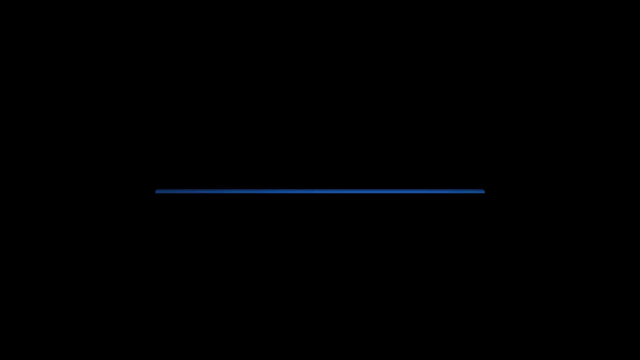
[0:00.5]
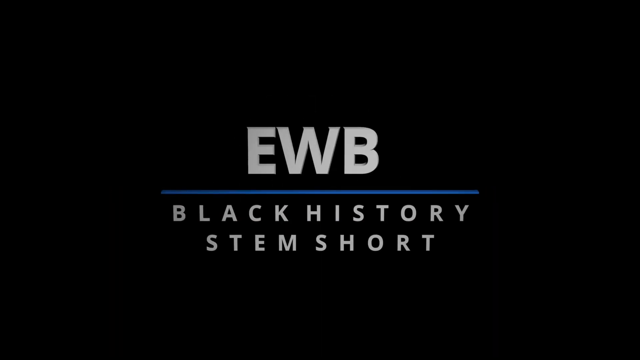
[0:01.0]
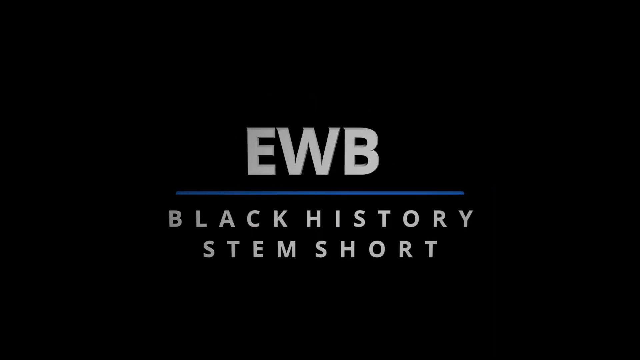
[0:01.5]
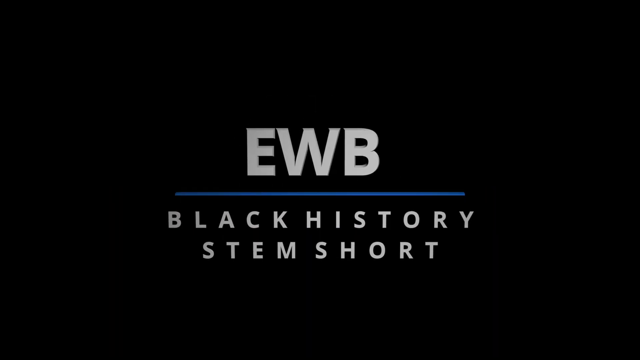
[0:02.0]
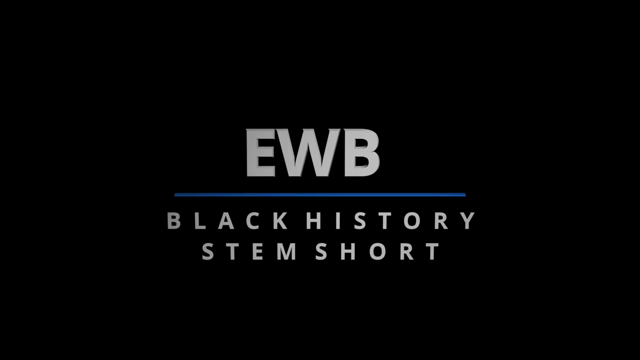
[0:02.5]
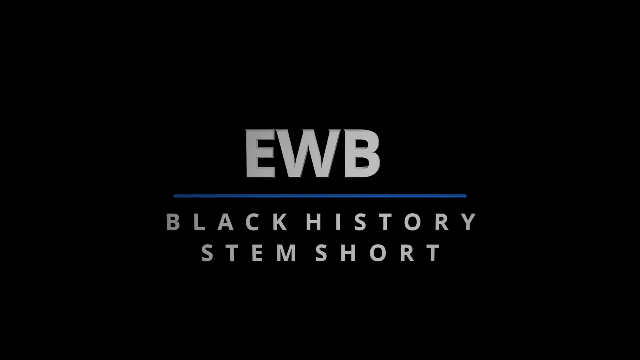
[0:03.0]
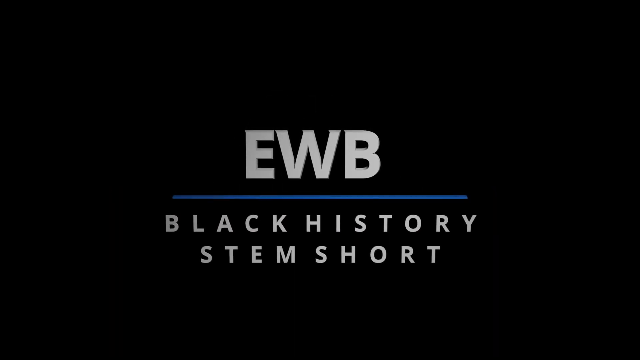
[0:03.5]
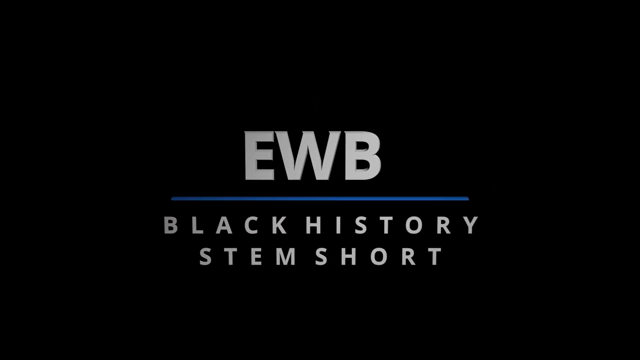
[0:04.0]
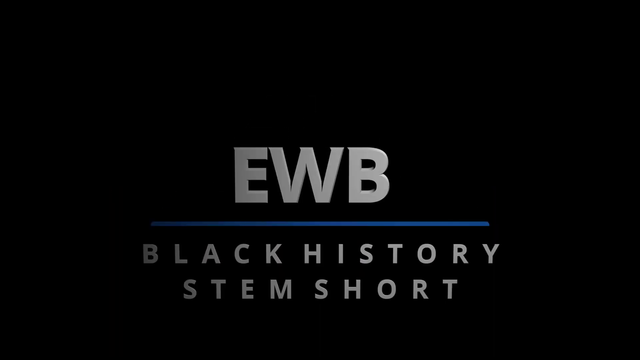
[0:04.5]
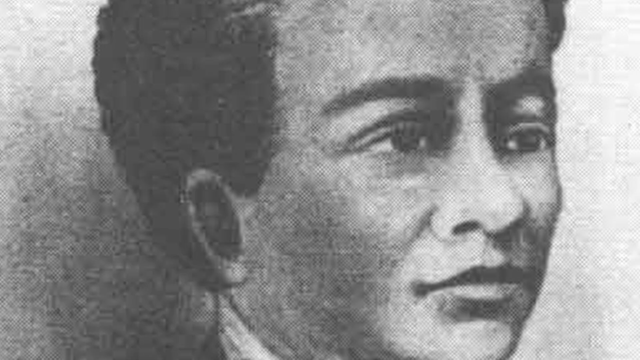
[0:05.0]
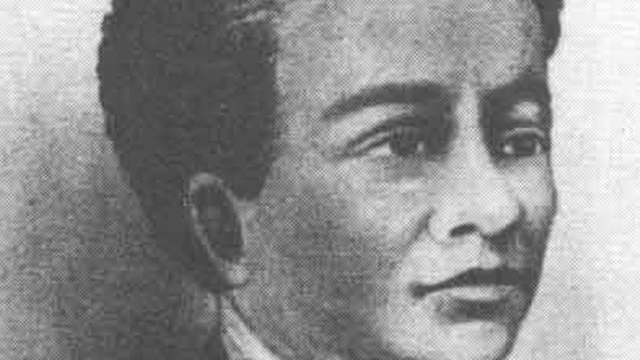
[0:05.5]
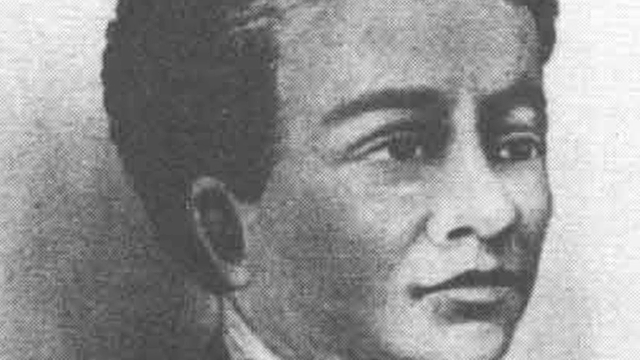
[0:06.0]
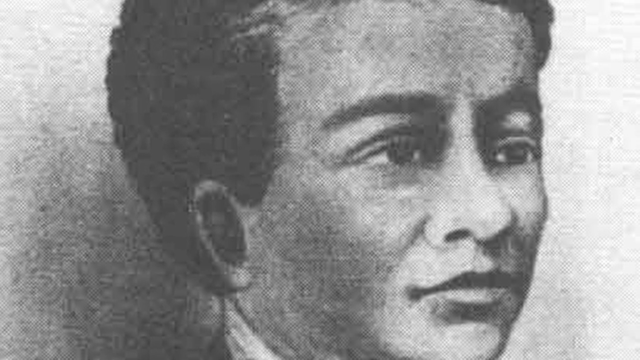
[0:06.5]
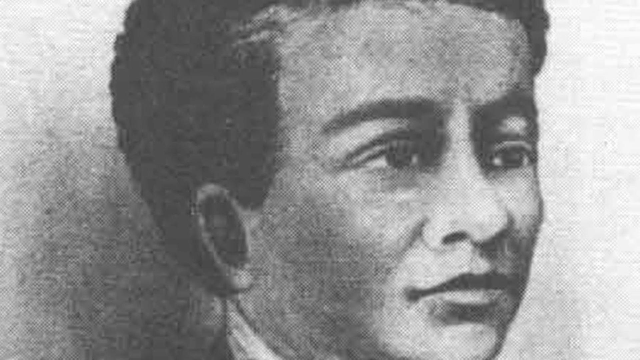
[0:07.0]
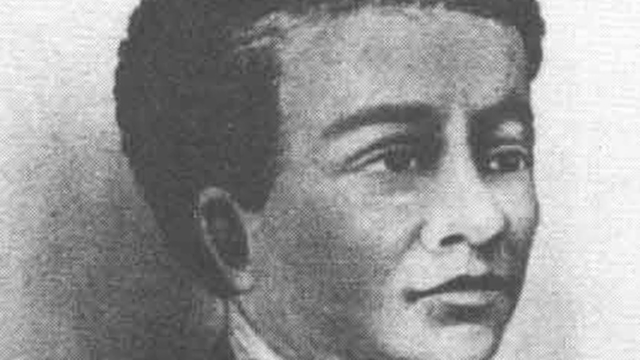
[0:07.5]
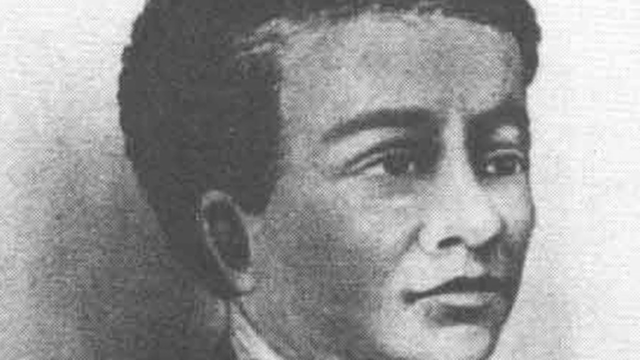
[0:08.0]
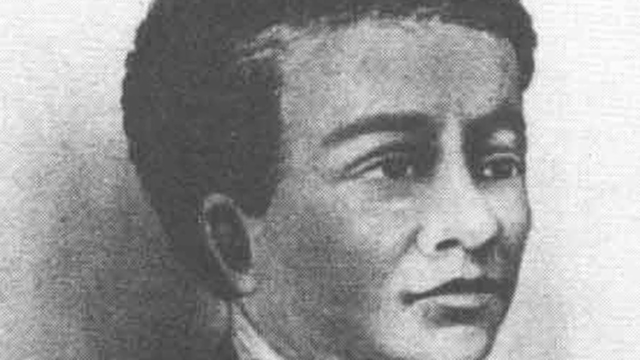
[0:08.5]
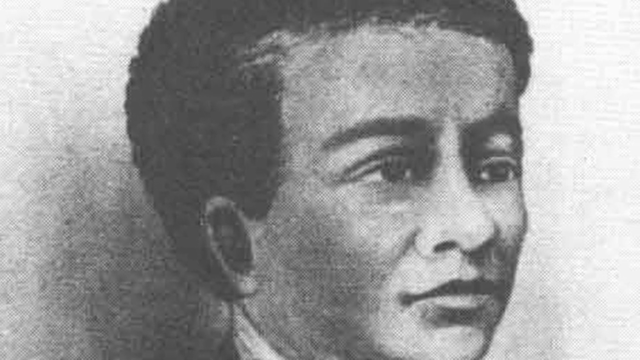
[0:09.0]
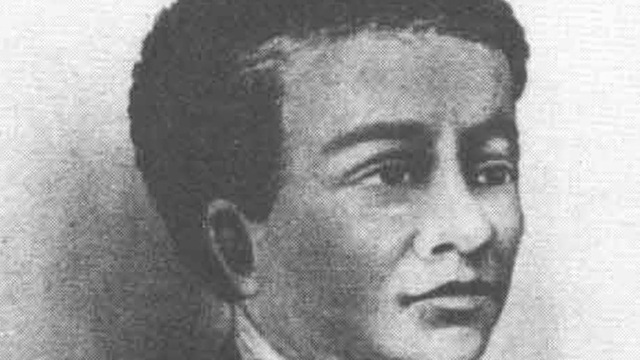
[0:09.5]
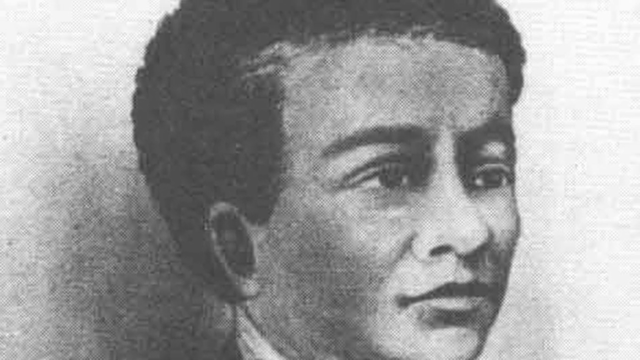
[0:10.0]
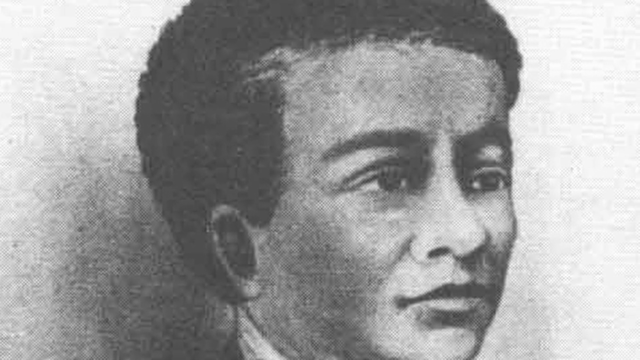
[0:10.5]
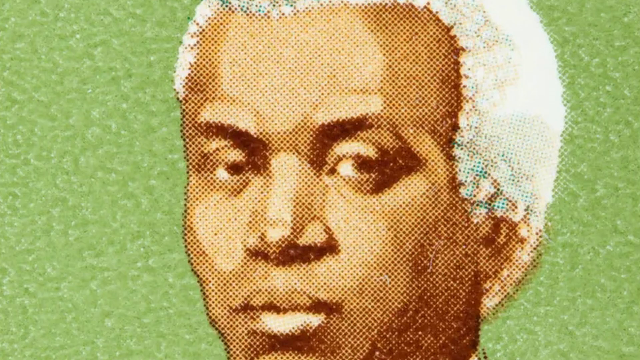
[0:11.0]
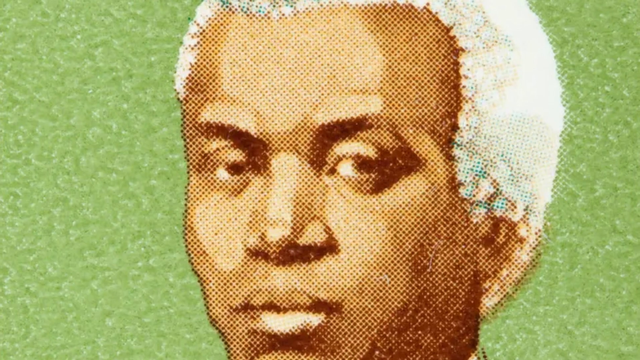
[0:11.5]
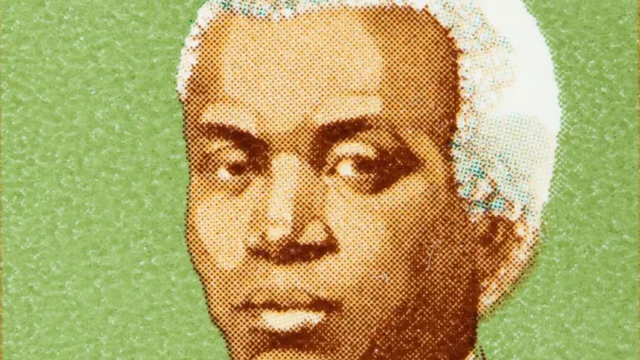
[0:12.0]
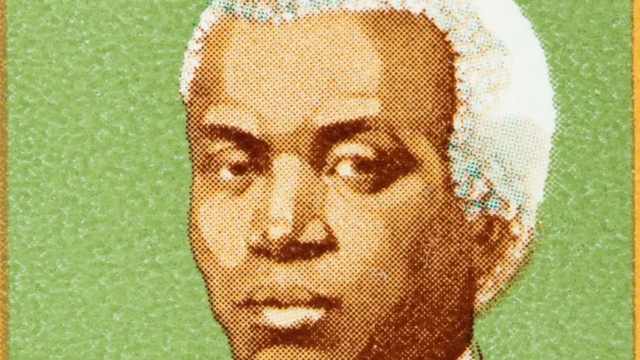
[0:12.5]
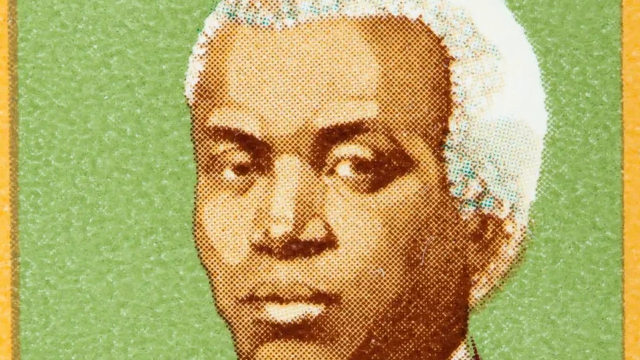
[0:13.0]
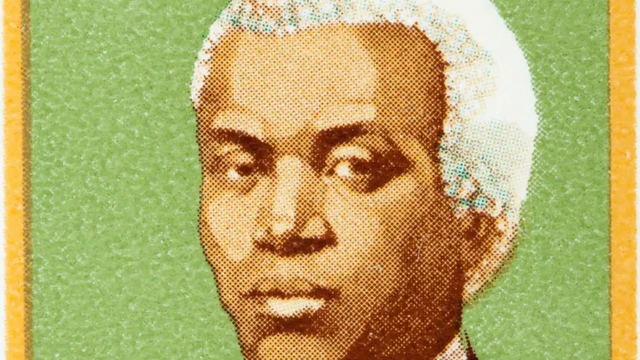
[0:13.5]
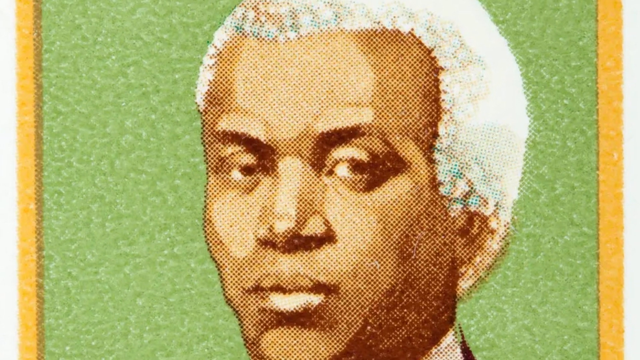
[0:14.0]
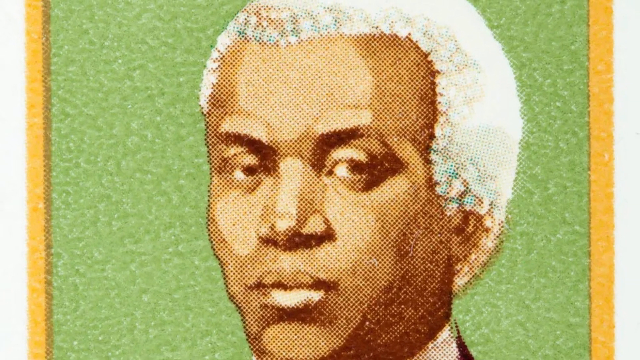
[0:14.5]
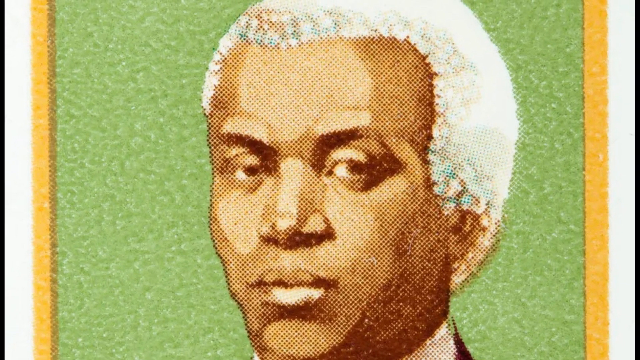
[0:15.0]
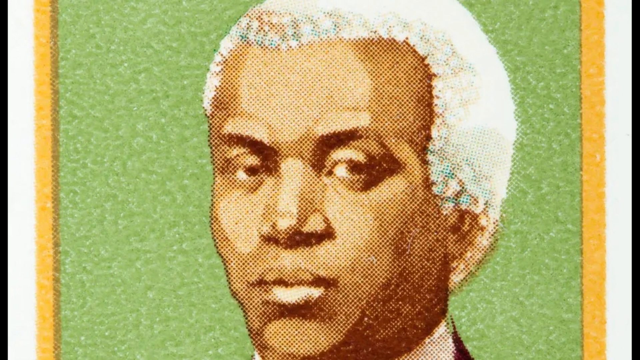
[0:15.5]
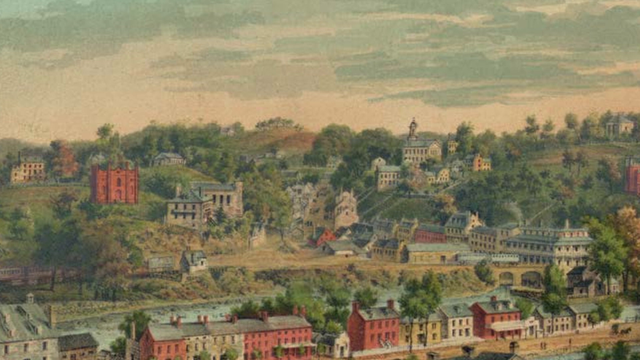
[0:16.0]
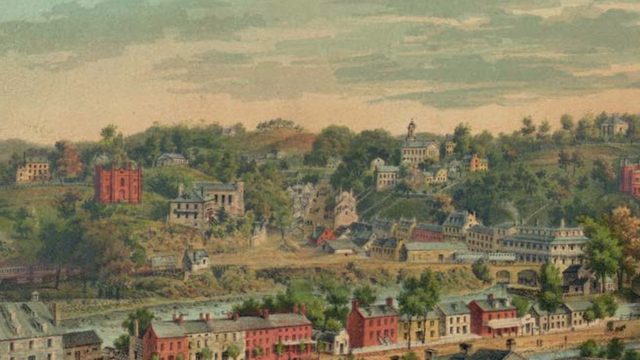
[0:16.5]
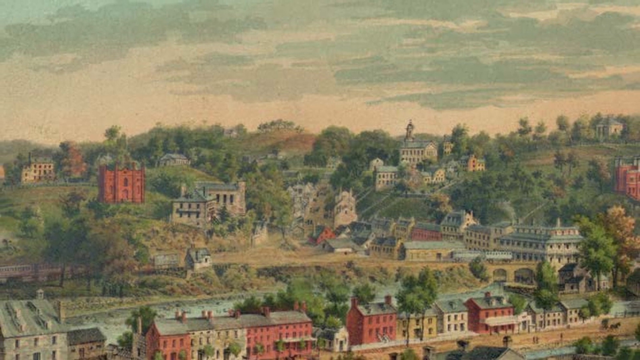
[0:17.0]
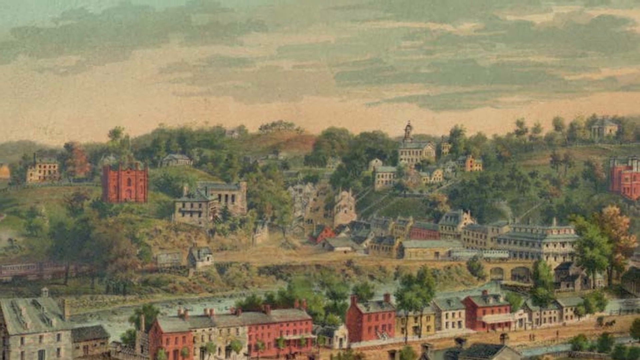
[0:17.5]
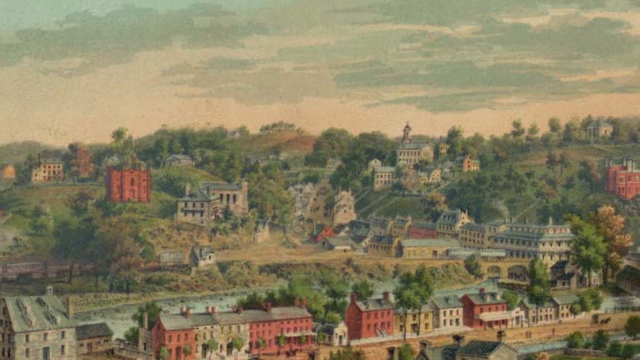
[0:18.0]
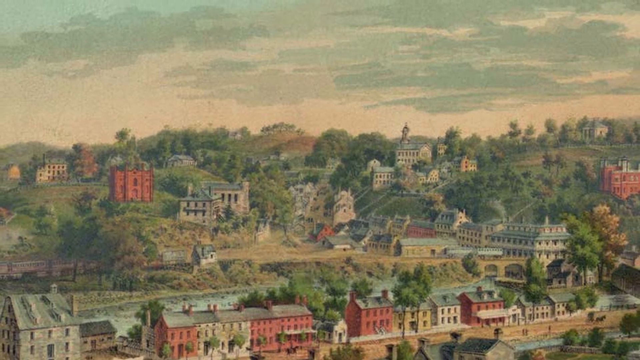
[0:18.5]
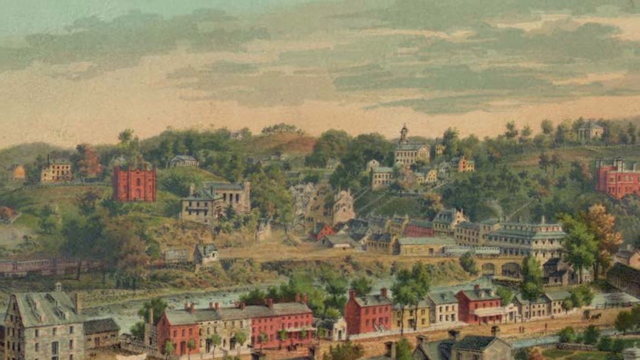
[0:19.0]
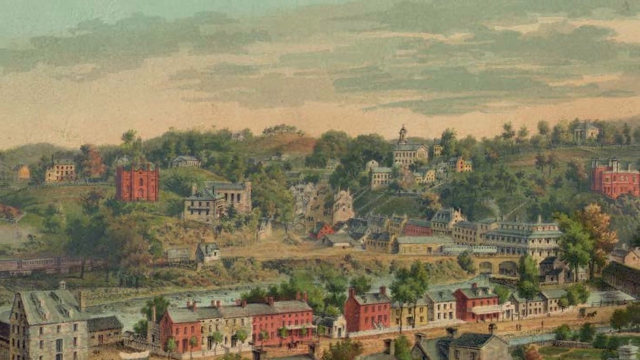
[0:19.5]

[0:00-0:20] A title page reads "EWB" and then "Black History Stem Short" in white letters against a black background. A close-up of a black and white picture of a young black man follows. The picture then cuts to a different image of a black man in an etched, dotted style, like a pixelated image, using tones of brown for the man's face and white for his hair. The man appears to be of African heritage, and his head is set against a green mottled background. The shot pans back out, showing a yellow border around the picture. The screen then cuts to a painting, possibly a watercolour, of a village or town. Houses in red, yellow and cream are in a line in the foreground, and more houses and large buildings go up the hillsides in the distance. There are lots of trees in the image. It looks quite old-fashioned, with no modern buildings.